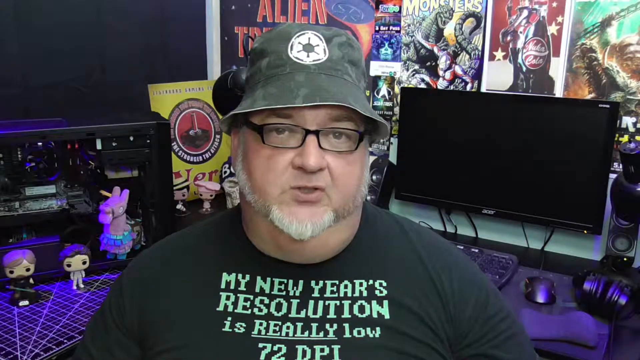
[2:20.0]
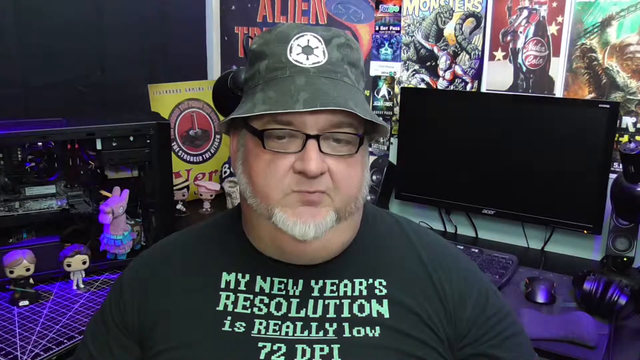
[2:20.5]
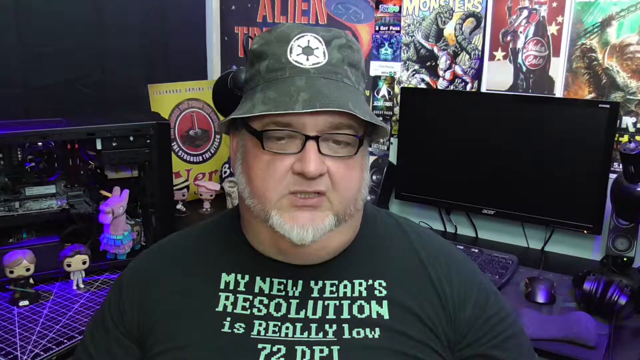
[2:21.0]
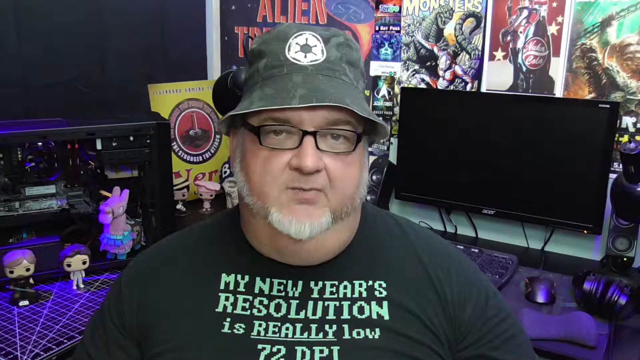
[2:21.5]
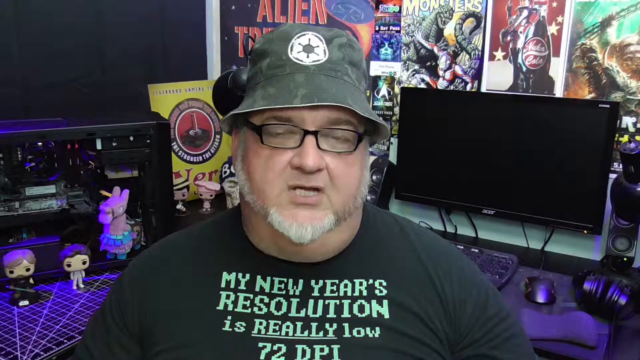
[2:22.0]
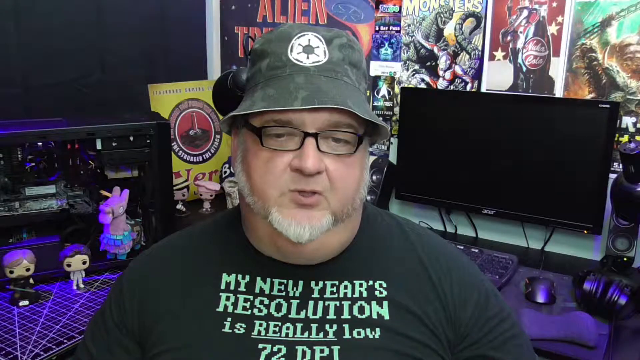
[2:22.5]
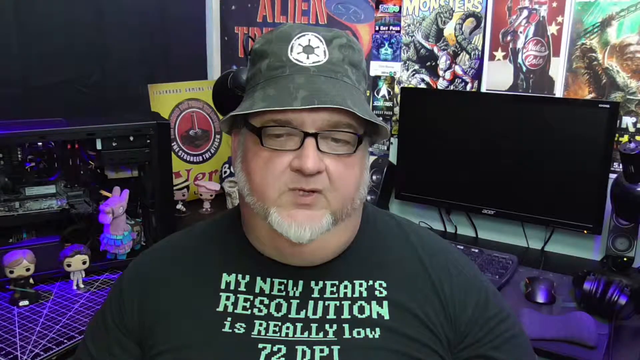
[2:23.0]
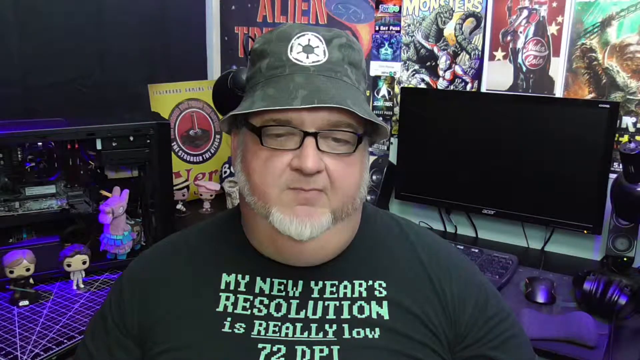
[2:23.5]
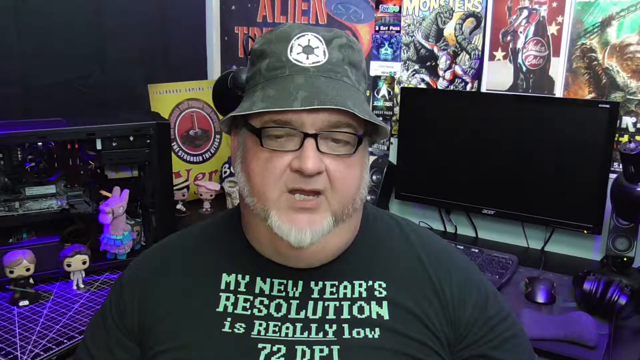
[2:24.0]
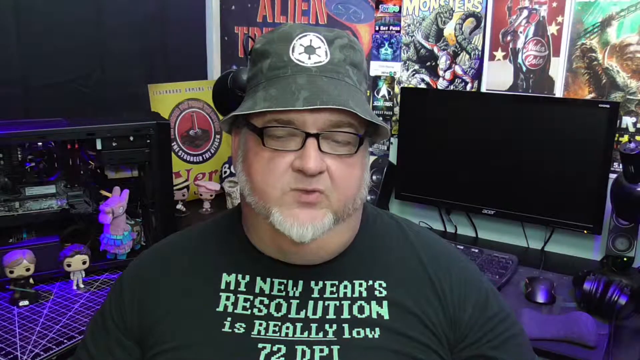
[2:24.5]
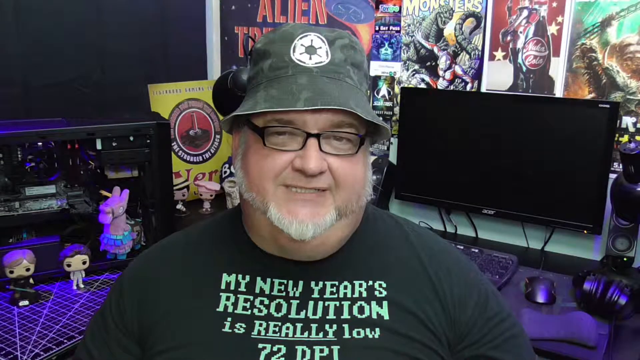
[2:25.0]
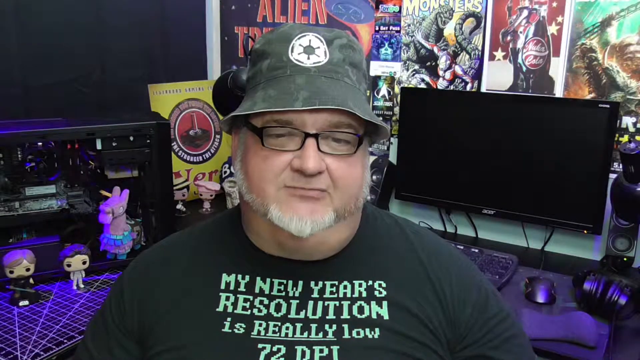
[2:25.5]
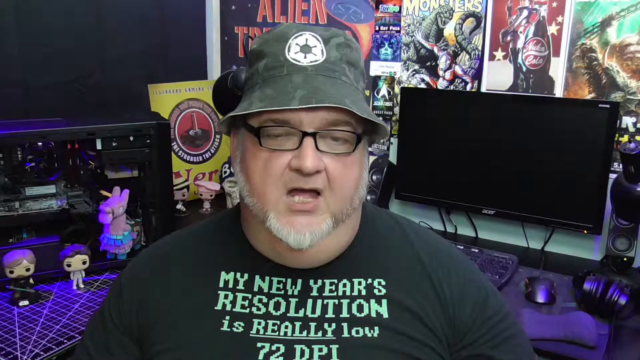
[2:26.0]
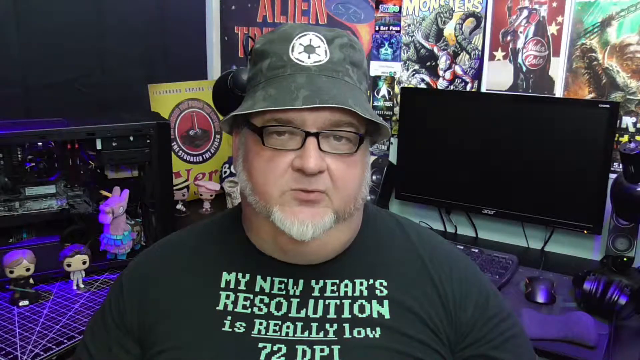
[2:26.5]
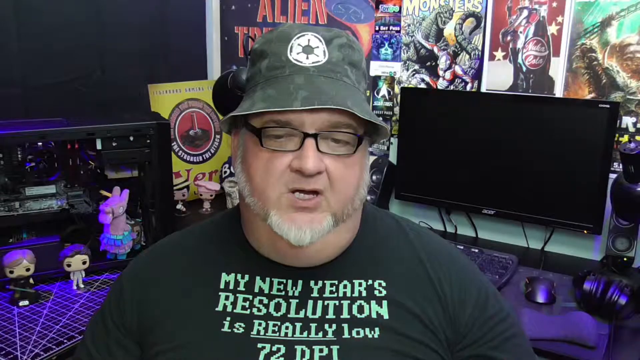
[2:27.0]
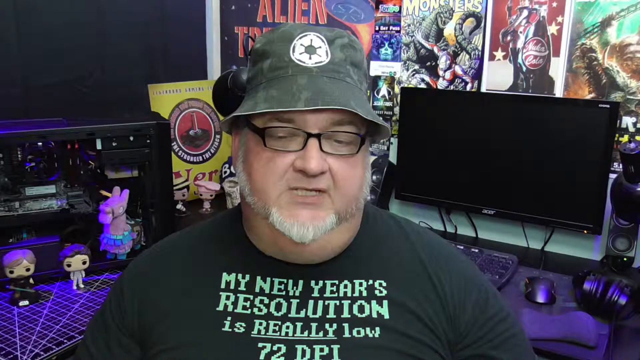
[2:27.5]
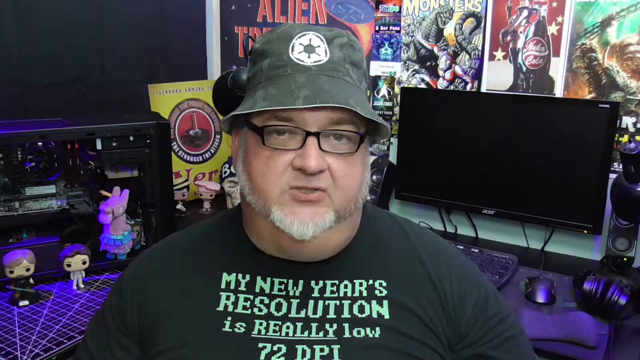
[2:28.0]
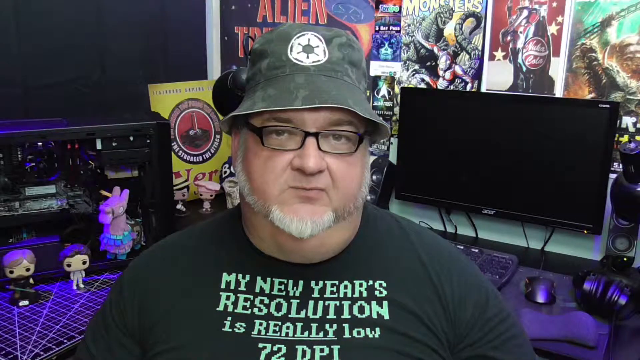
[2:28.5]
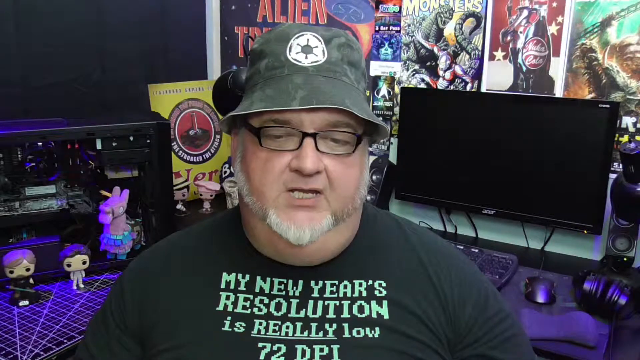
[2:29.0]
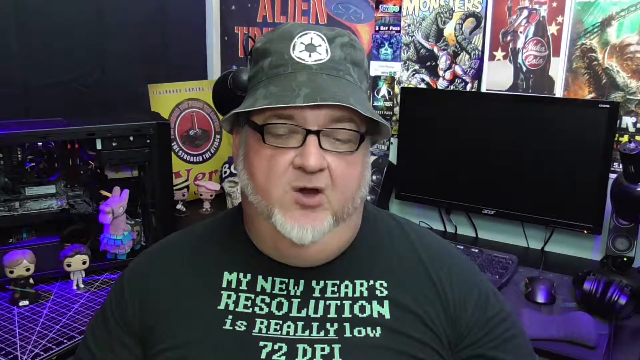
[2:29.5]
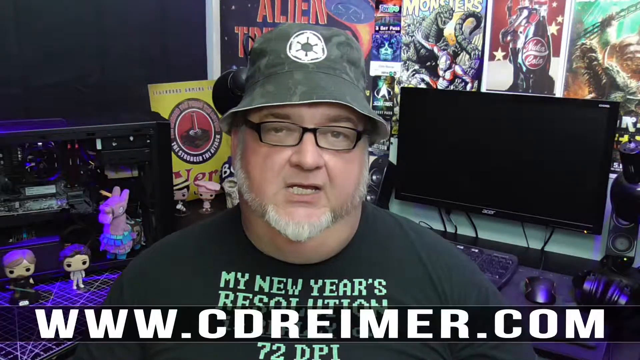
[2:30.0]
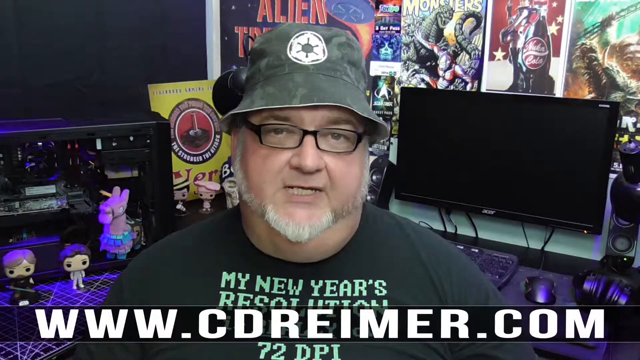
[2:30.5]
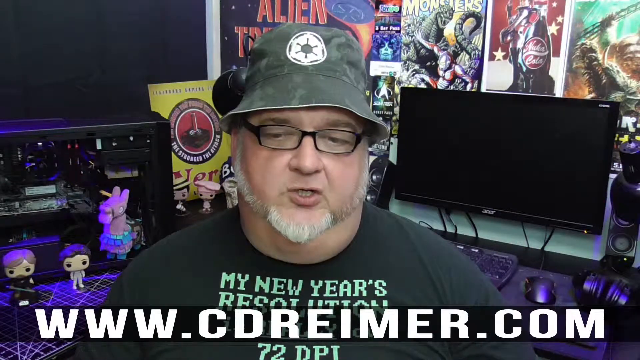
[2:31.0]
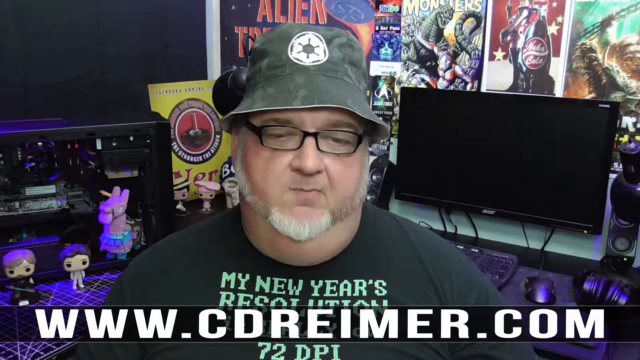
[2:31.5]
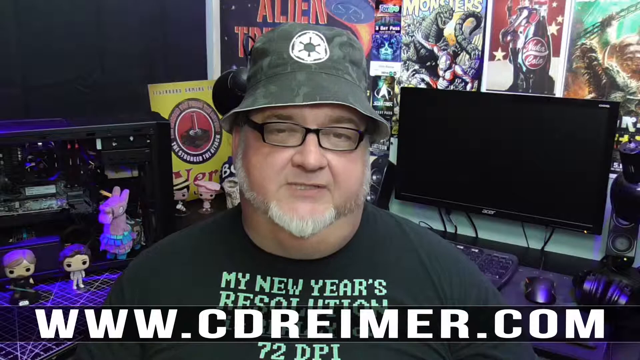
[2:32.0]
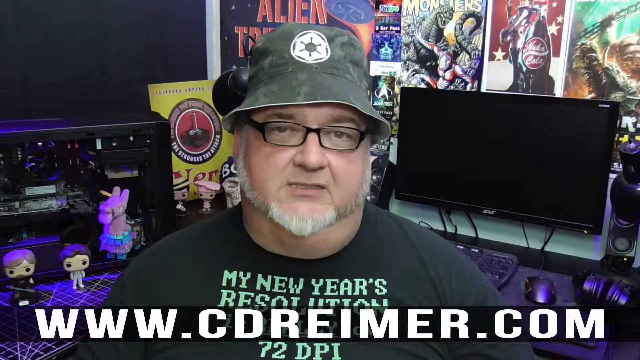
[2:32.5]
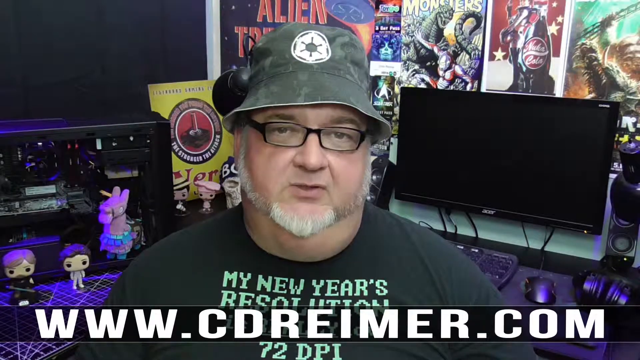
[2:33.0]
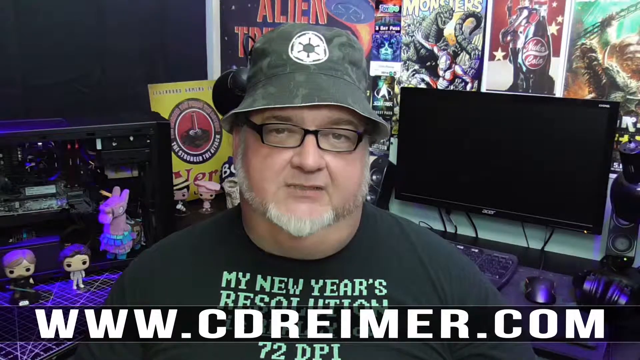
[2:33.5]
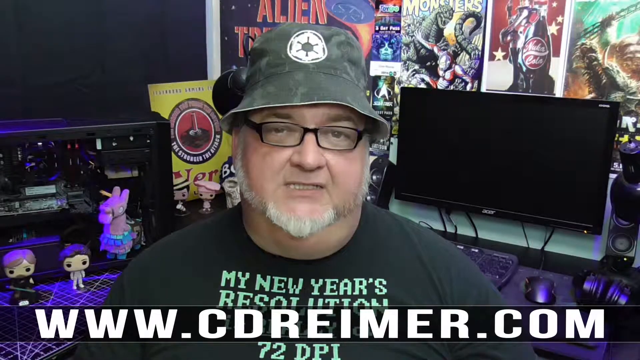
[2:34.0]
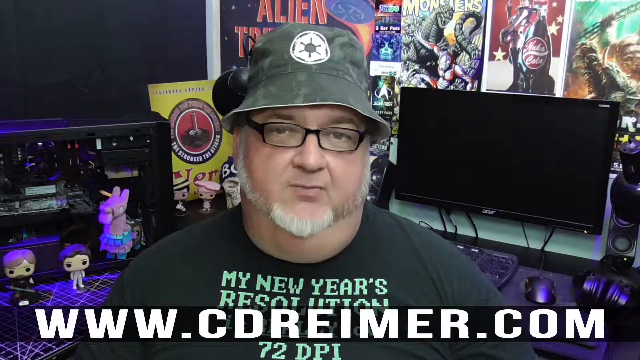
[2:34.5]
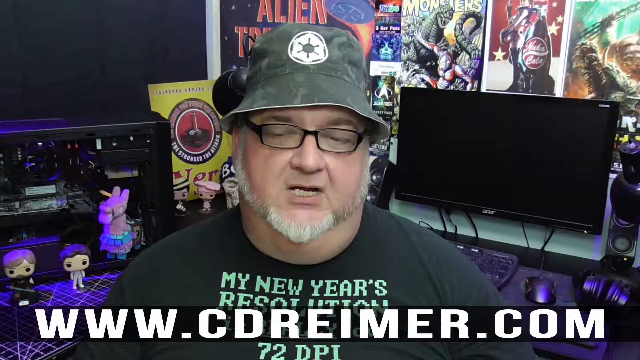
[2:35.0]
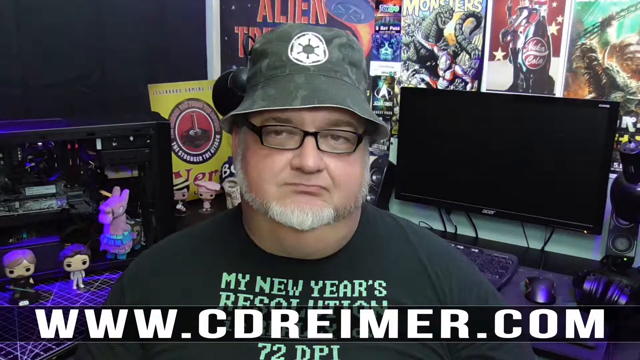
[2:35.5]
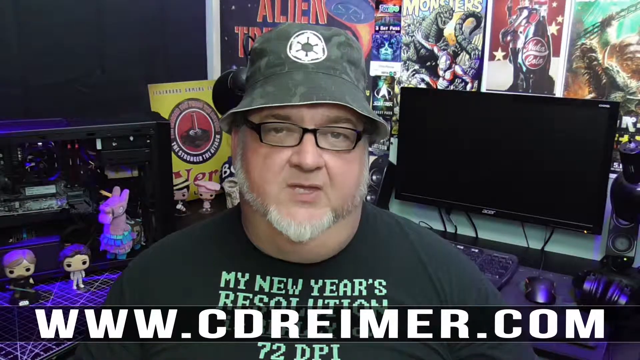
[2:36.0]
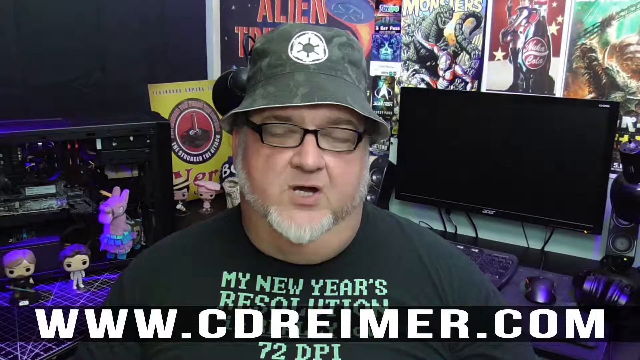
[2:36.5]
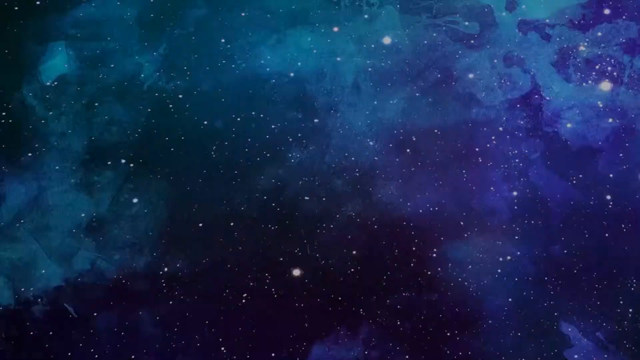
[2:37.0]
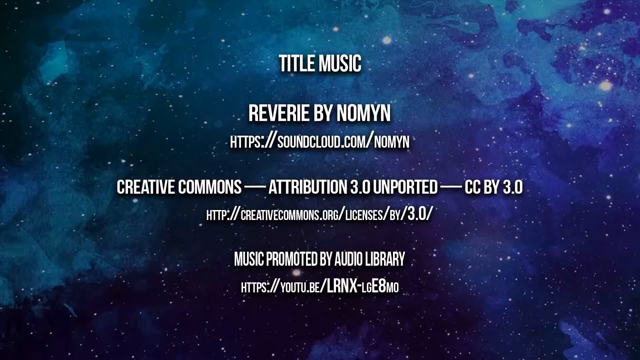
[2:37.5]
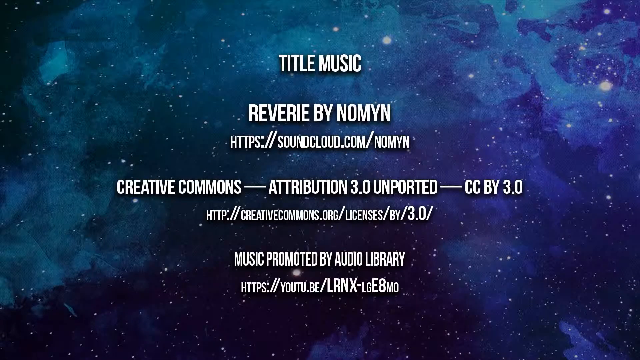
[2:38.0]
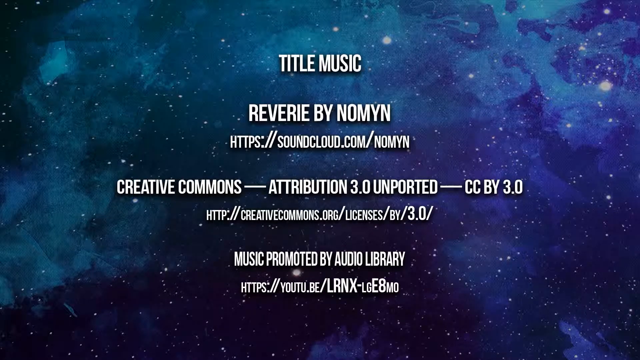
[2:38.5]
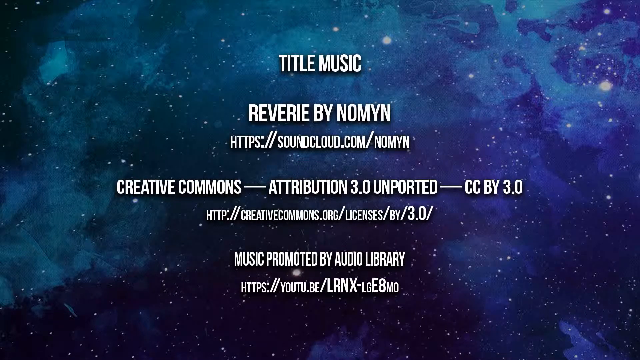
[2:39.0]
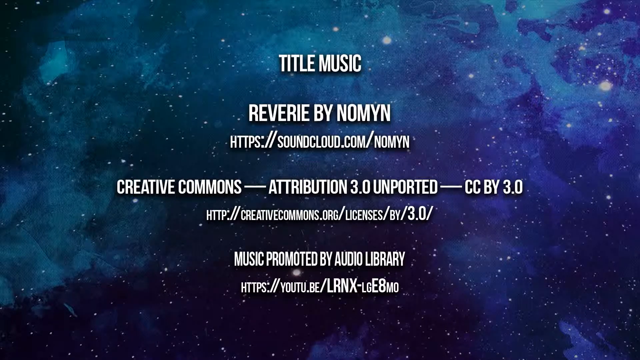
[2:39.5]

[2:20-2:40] The man continues speaking to the camera. His shirt clearly says "my new year's resolution is really low 72 dpi". He now seems to be advertising his own website: a pop-up appears at the bottom of the screen like a subtitle, a black, partly transparent rectangle that spans the whole width of the screen and is probably about three or four centimeters tall, so what is underneath still shows through. Written on it in all caps, taking up almost the whole space with a little margin, is "www.cdreimer.com". He keeps speaking while the website is shown, and then the video cuts to what looks to be the credits, over a galaxy background picture that is greenish blue on the left and transitions into a deeper blue on the right, with white stars; the whole picture is a bit dark. The credits are on top in white all-caps letters, starting with "title music".